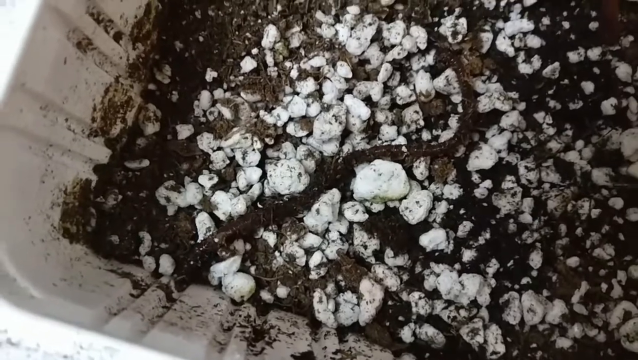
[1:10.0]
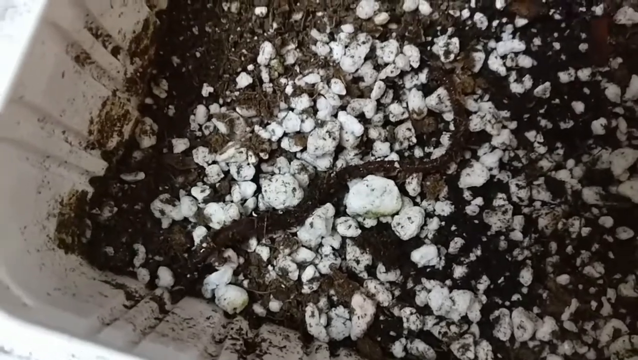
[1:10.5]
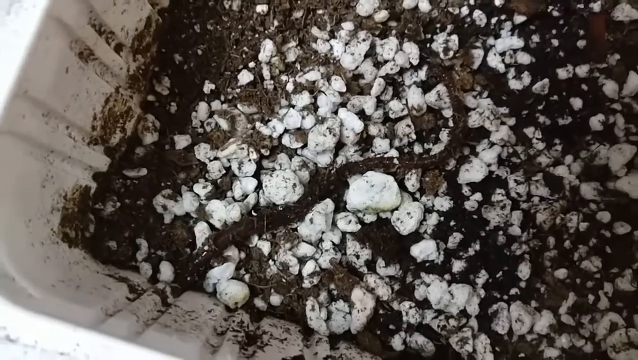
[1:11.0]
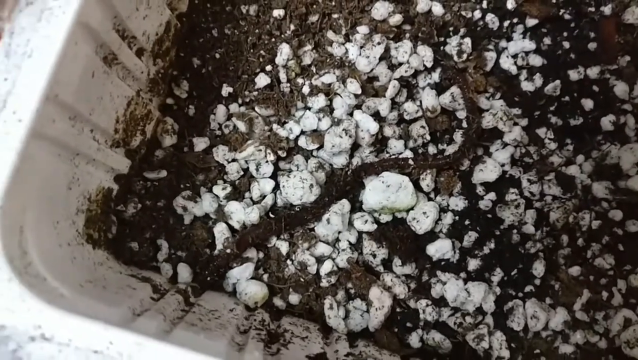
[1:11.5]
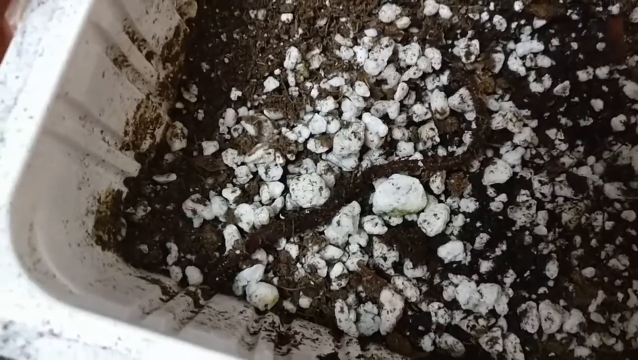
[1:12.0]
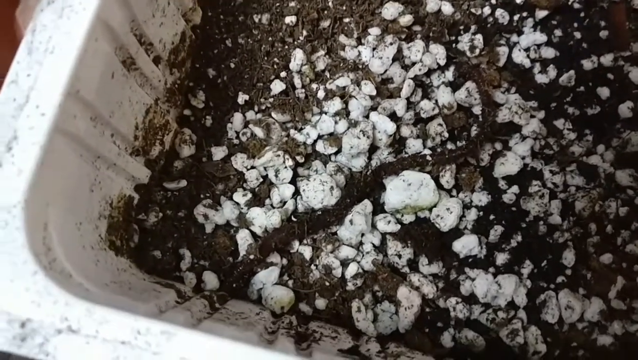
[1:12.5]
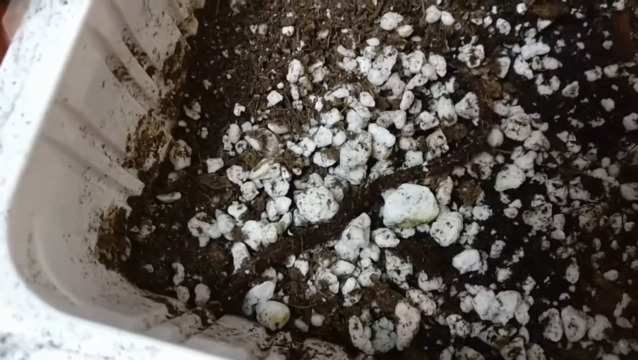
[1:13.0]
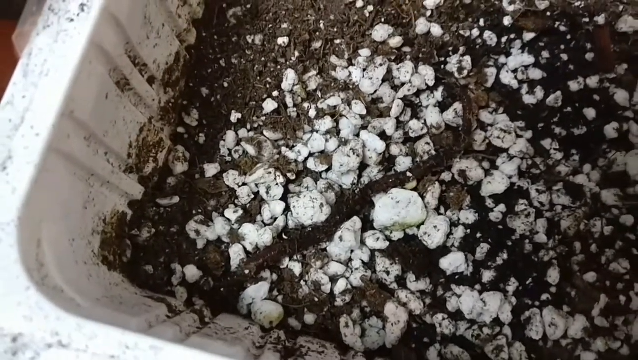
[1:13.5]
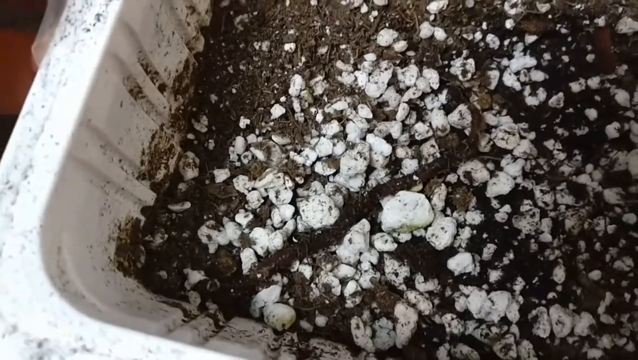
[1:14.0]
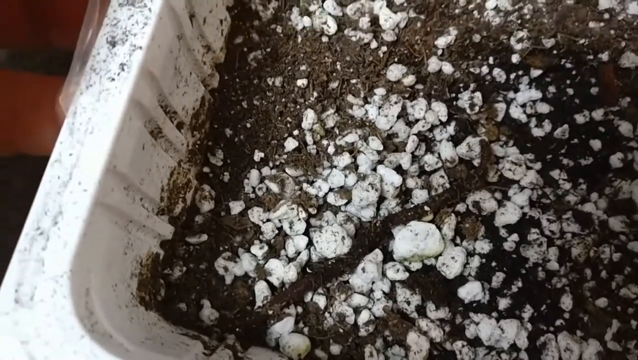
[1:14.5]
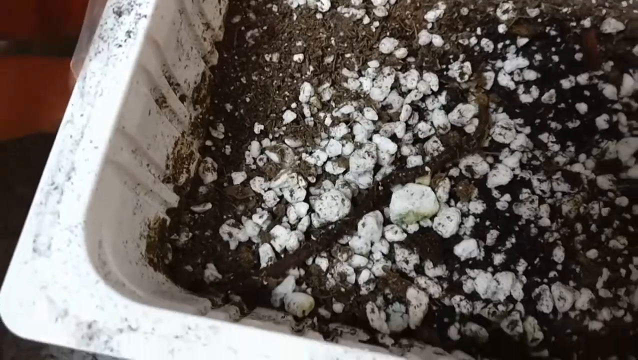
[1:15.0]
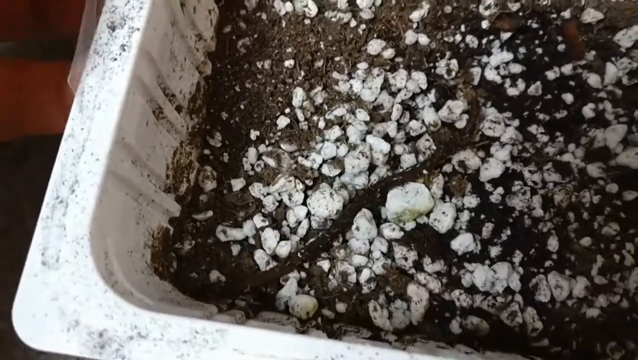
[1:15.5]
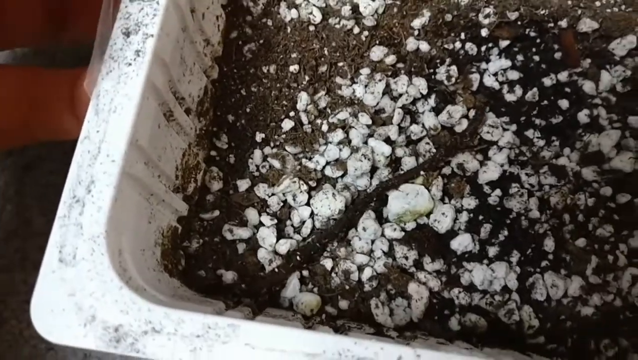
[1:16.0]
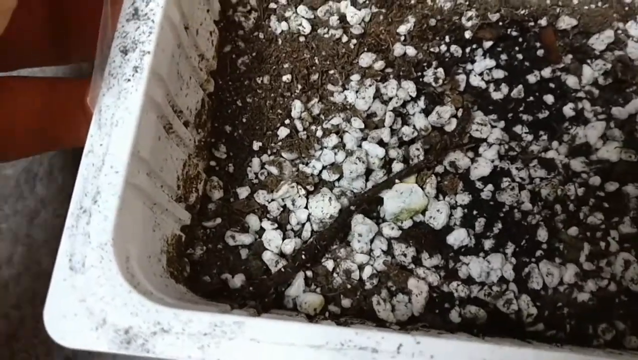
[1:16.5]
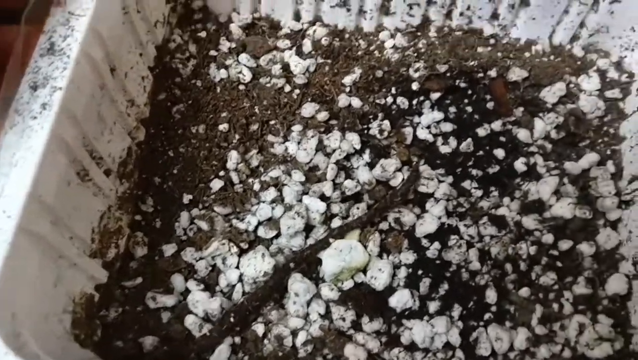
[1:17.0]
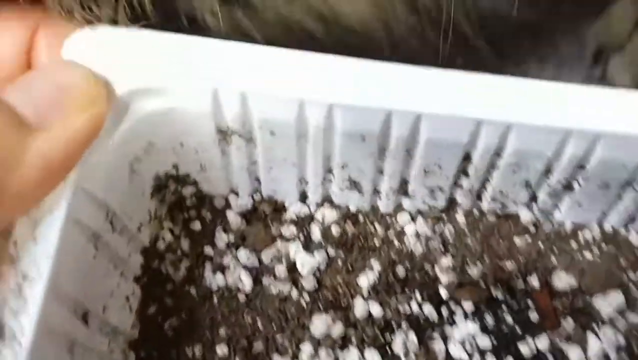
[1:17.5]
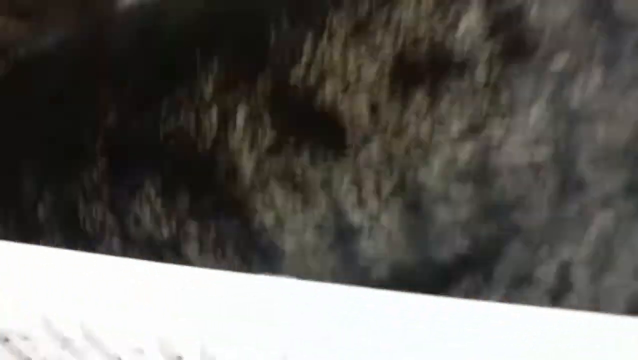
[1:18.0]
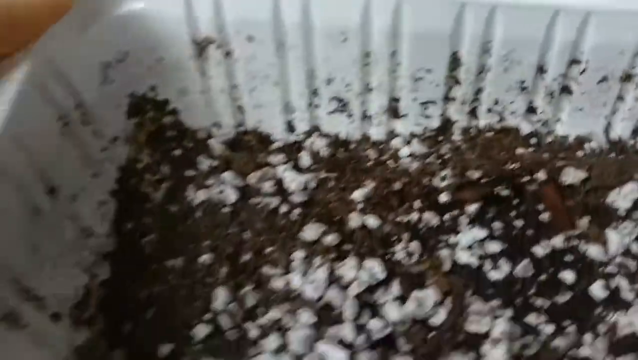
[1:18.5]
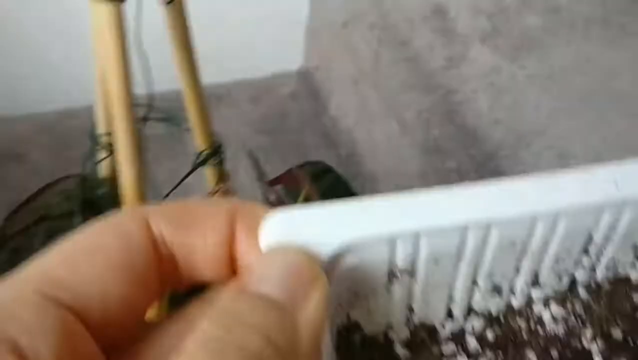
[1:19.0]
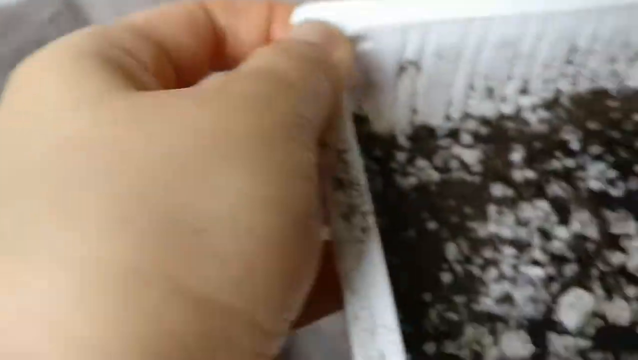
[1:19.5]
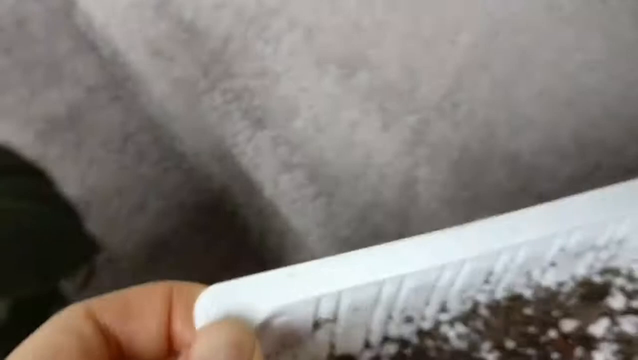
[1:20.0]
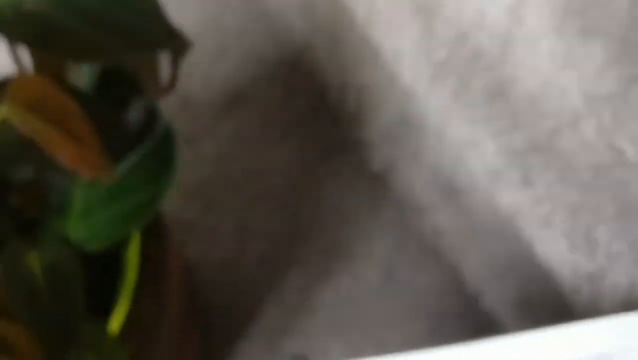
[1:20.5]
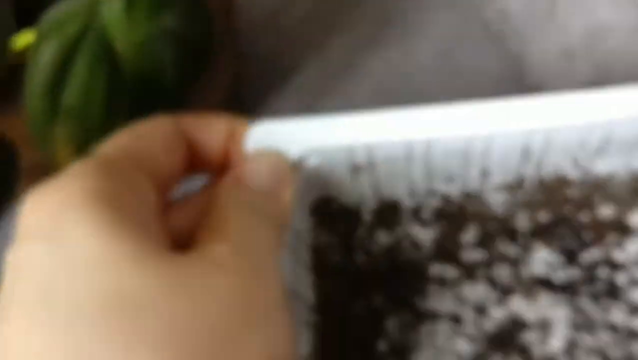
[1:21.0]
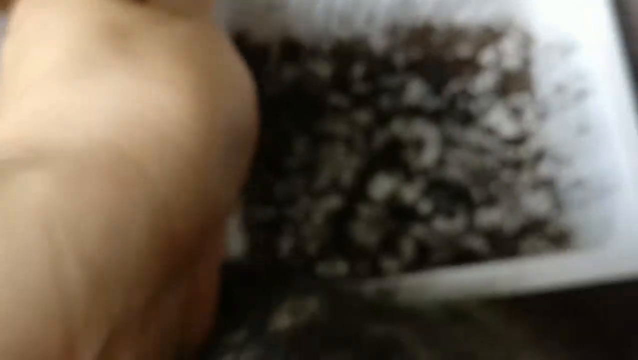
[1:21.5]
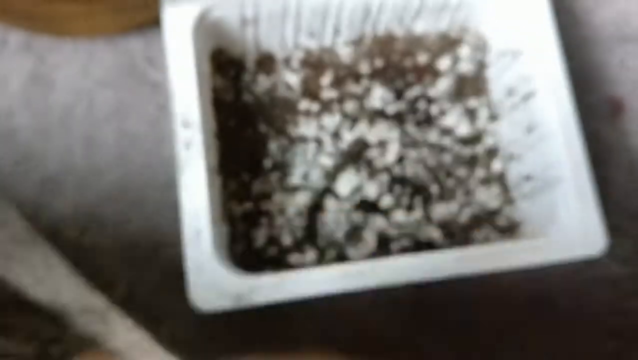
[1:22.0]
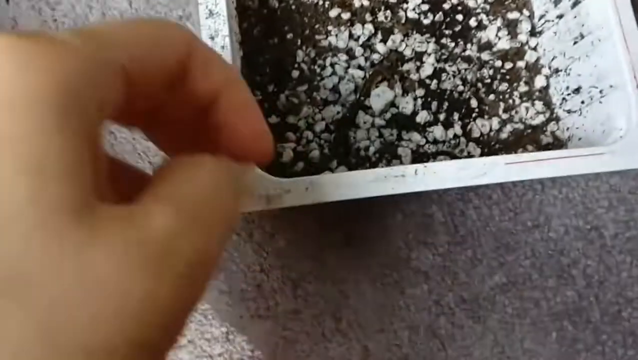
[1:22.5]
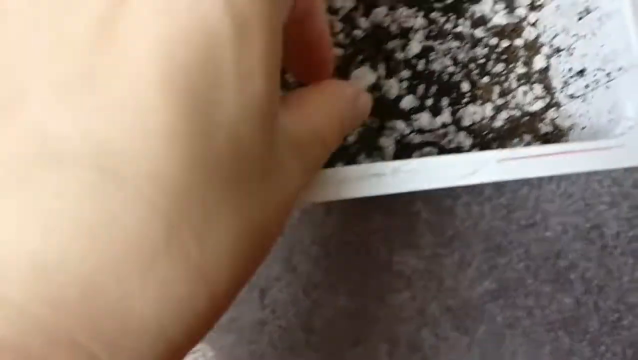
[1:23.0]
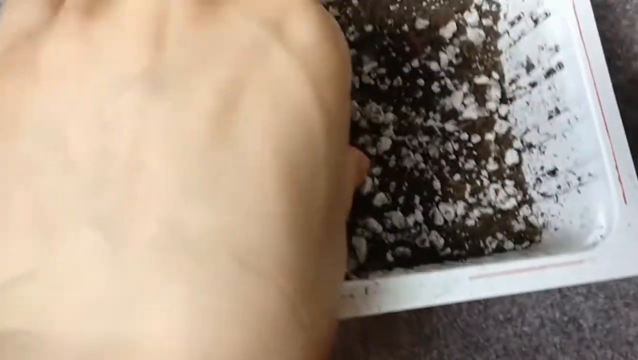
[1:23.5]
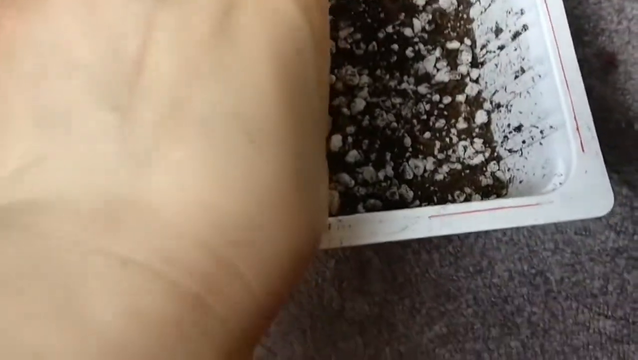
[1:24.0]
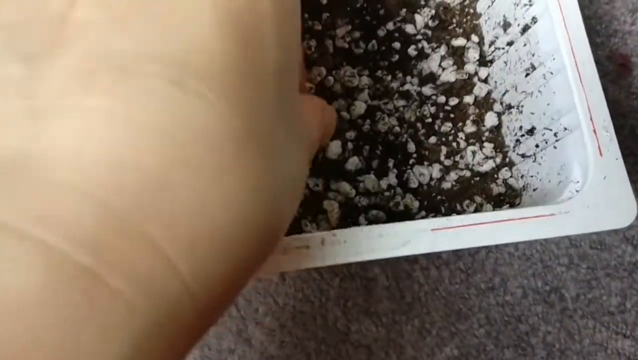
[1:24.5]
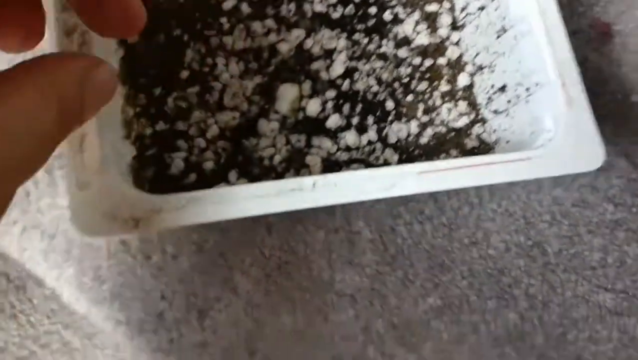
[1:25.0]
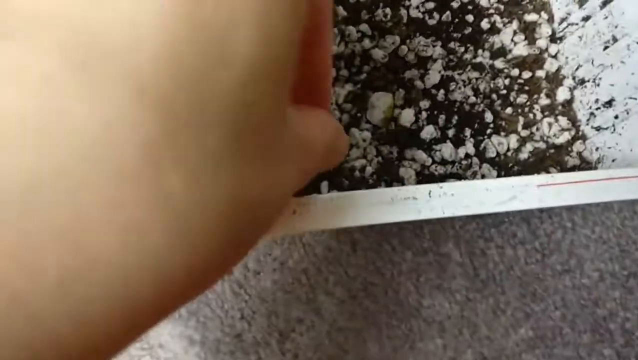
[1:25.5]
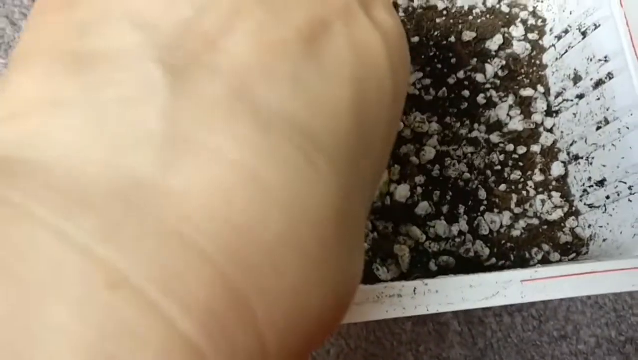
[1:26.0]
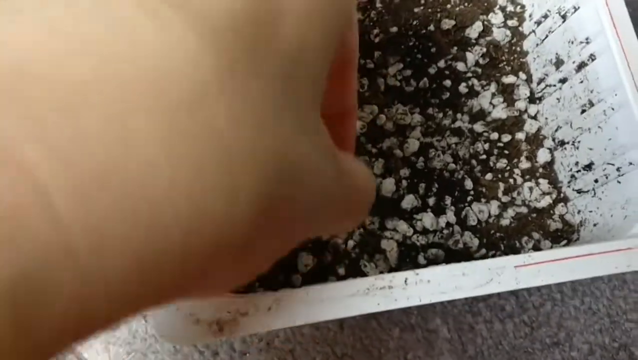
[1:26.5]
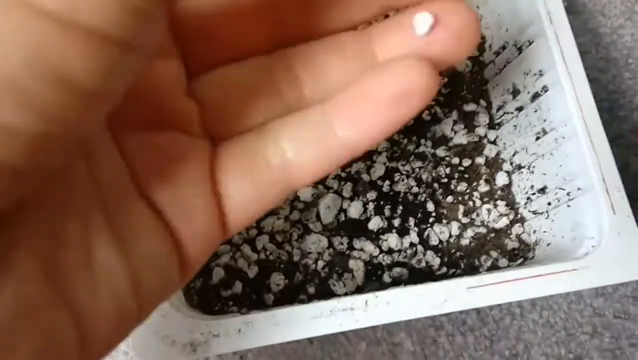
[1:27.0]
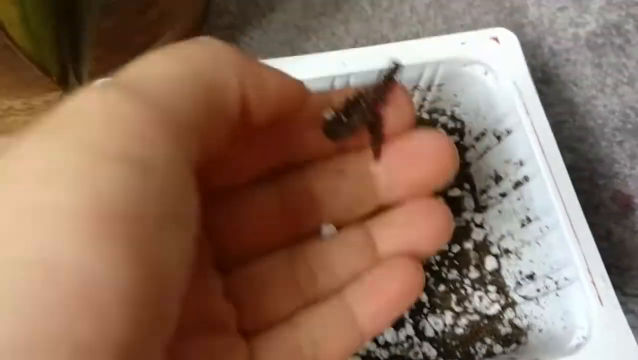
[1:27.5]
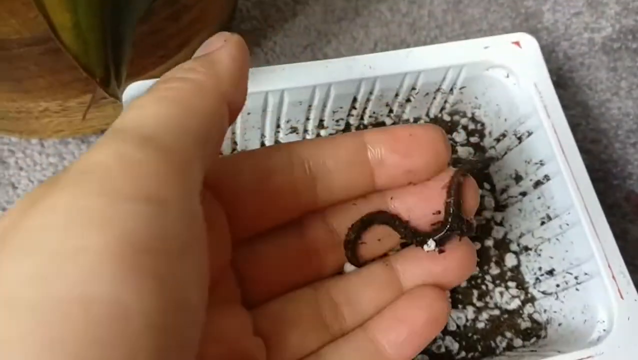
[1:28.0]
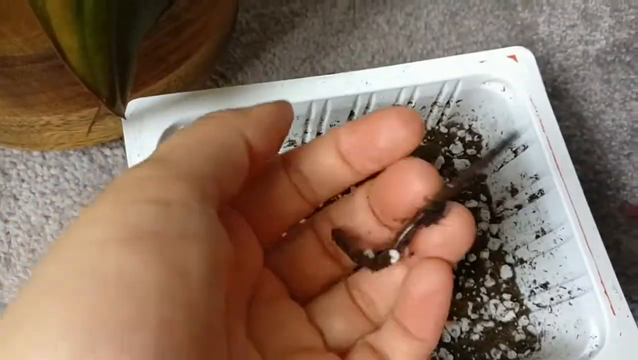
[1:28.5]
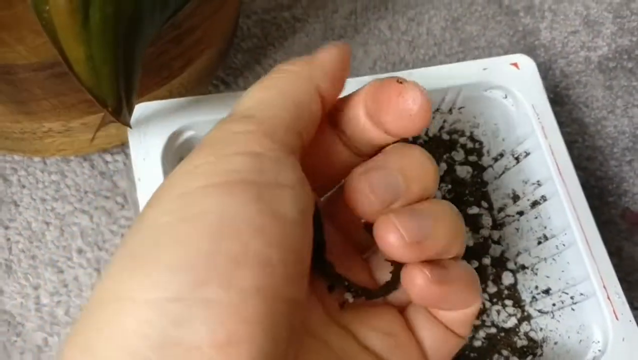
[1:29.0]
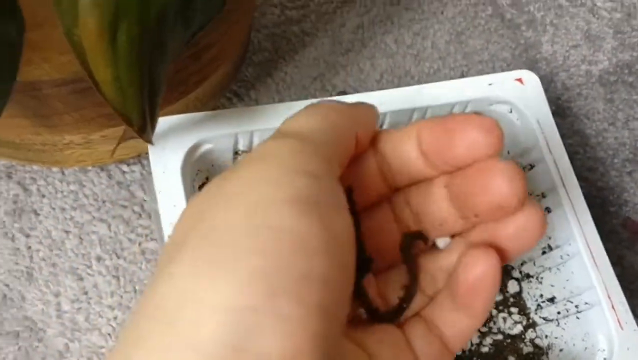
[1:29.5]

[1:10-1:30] Someone films inside a plant container that is square and white, with dirt at the bottom and little white rocks. A black earthworm squirms around, moving some of the little white rocks; the camera is very zoomed in on it. The worm is in the bottom corner. The person's left hand, Caucasian and looking like a man's hand, holds onto the container. They start to walk, and the camera moves around, becoming a little hard to follow. A gray-beige carpet comes into view, and they set the container down on the carpet. The image goes blurry and out of focus, then comes back into focus.